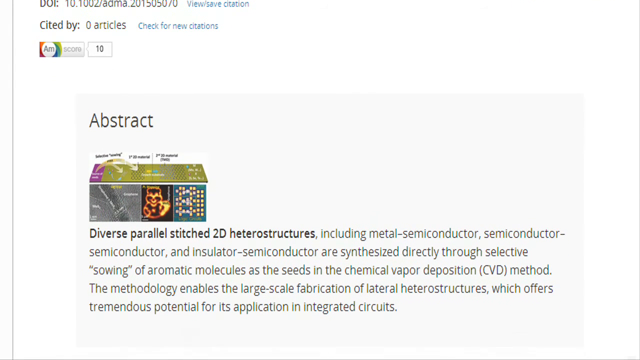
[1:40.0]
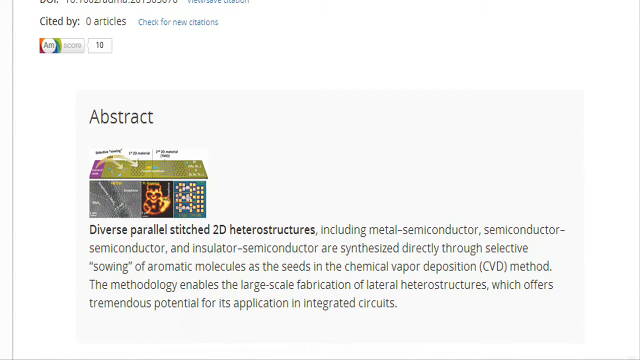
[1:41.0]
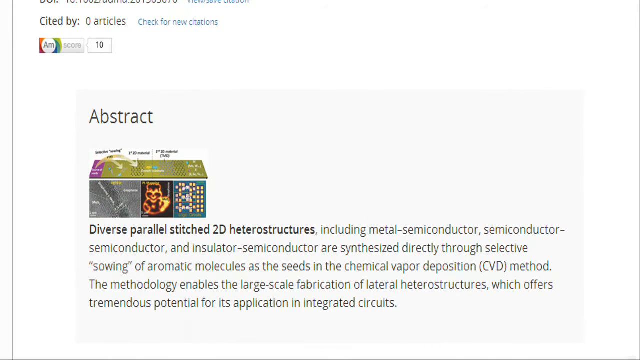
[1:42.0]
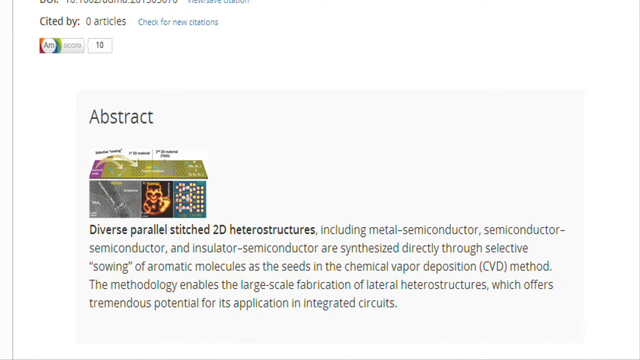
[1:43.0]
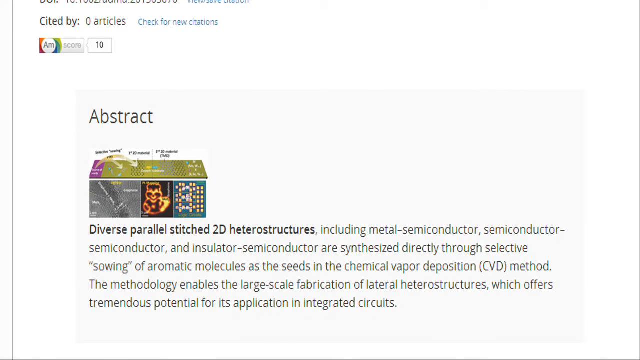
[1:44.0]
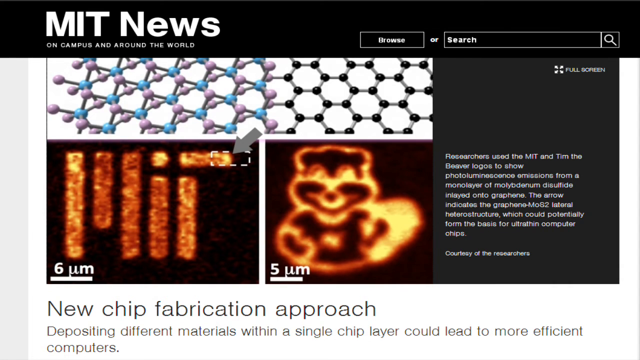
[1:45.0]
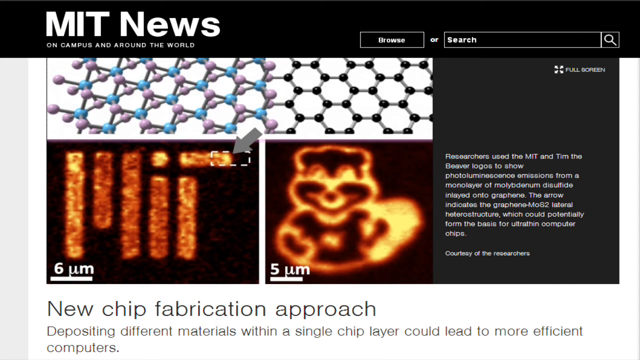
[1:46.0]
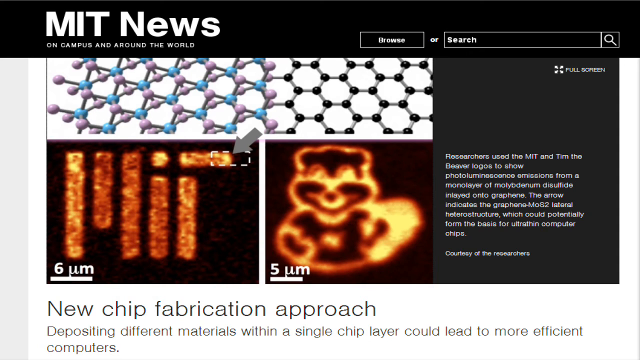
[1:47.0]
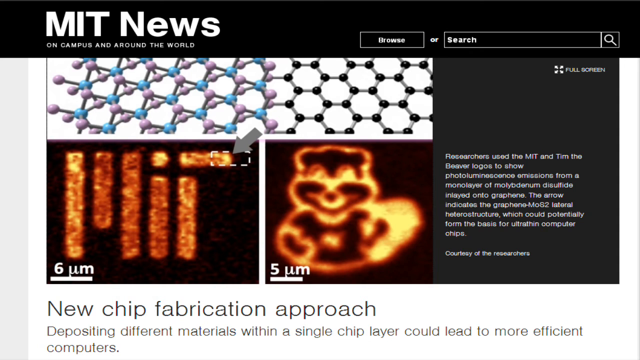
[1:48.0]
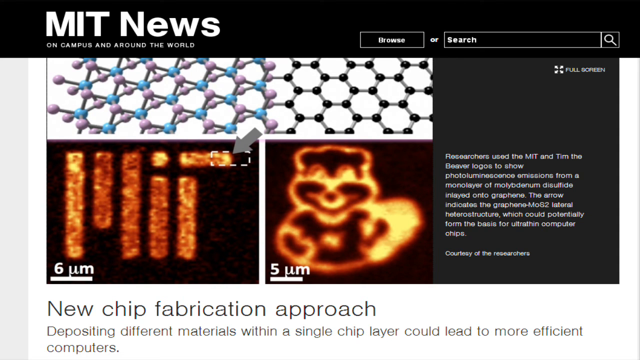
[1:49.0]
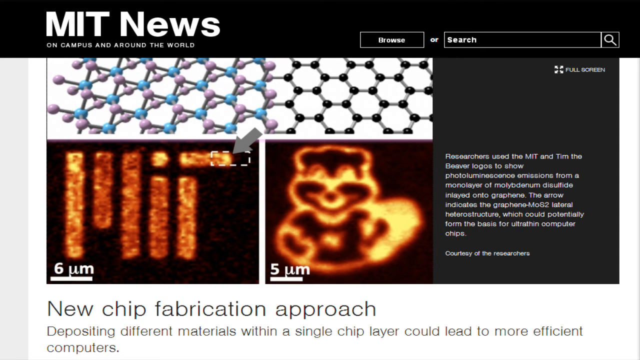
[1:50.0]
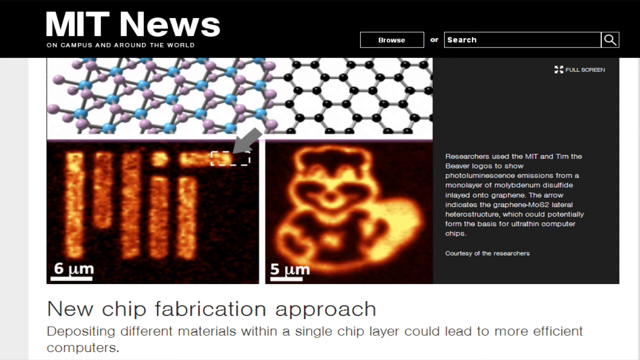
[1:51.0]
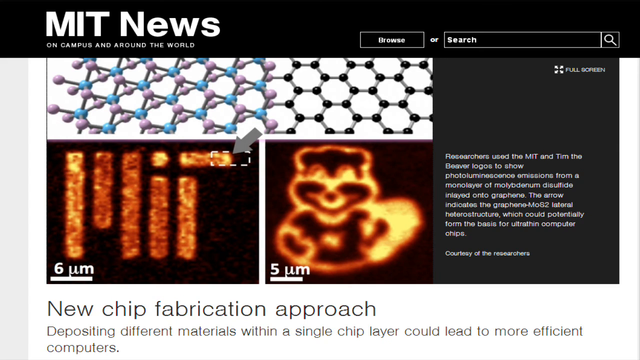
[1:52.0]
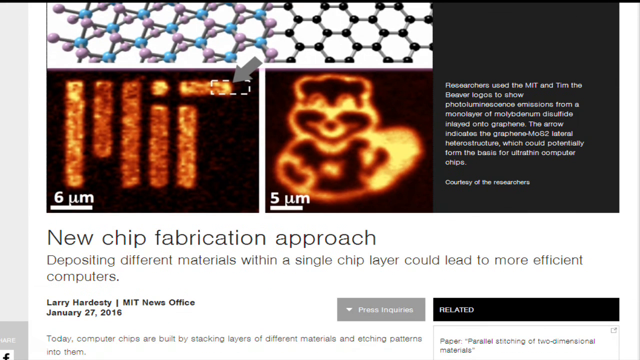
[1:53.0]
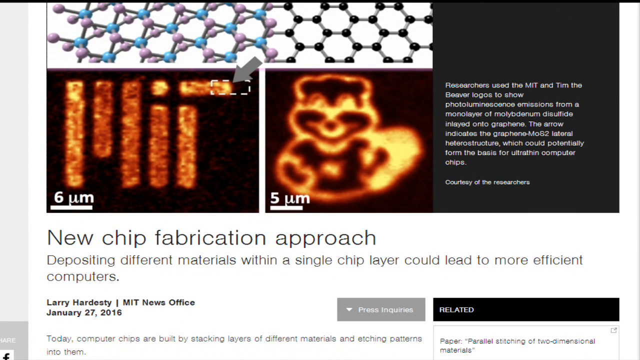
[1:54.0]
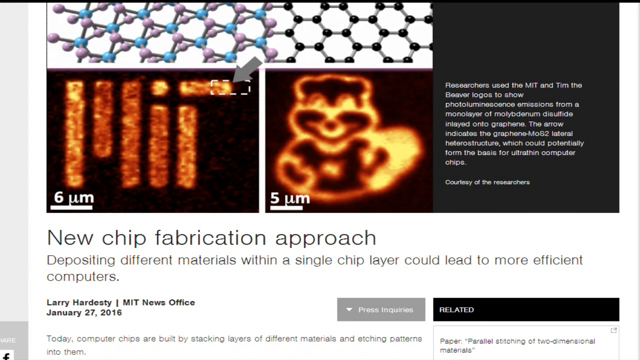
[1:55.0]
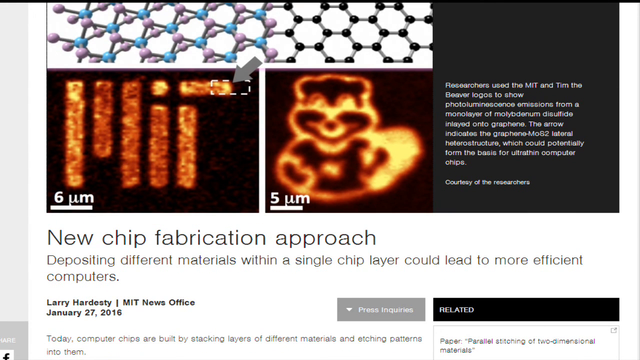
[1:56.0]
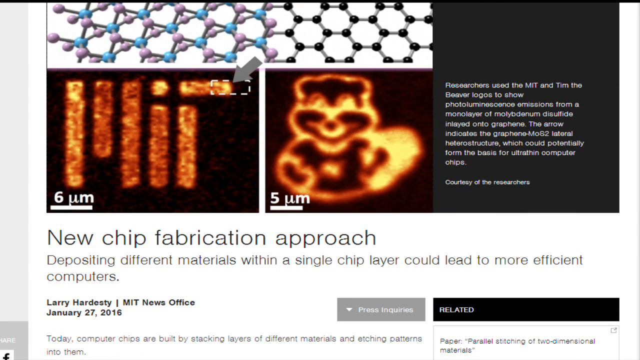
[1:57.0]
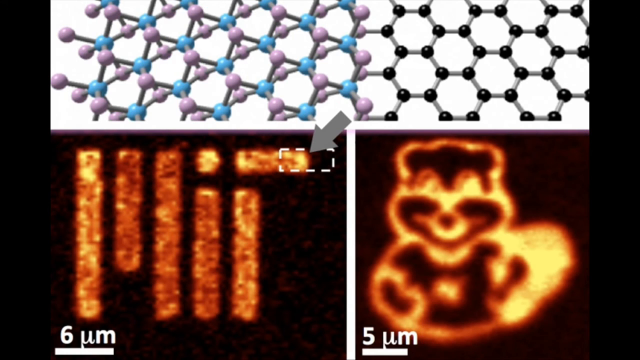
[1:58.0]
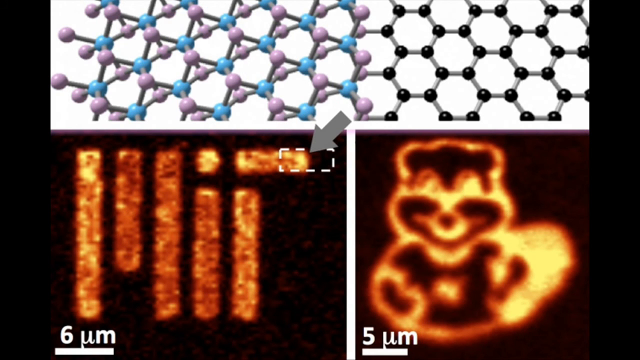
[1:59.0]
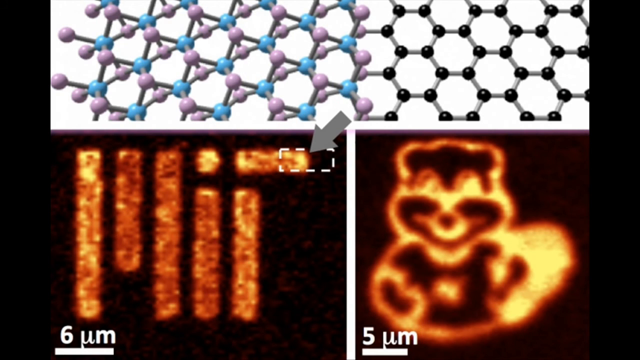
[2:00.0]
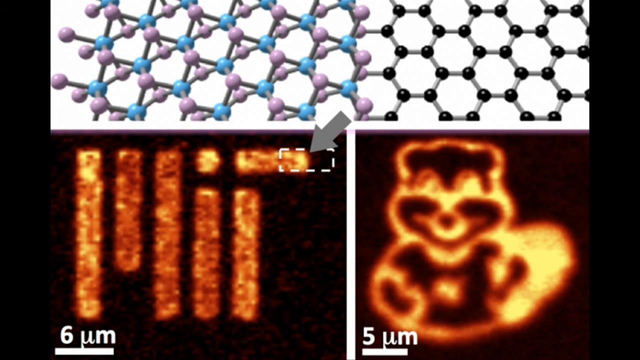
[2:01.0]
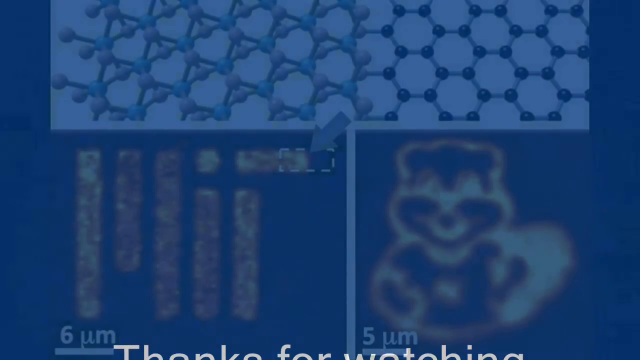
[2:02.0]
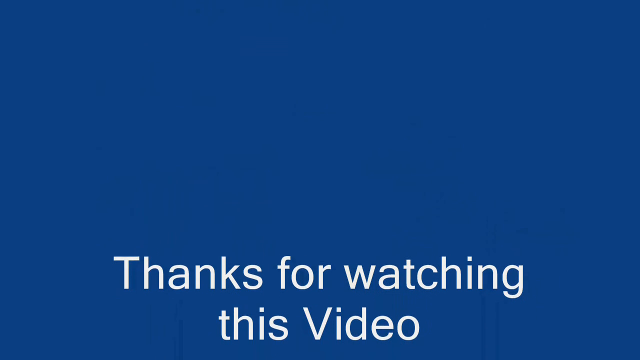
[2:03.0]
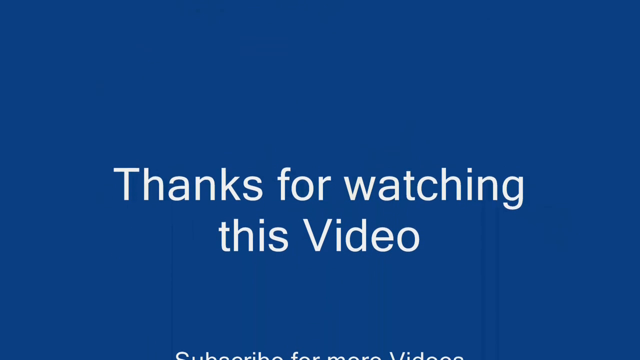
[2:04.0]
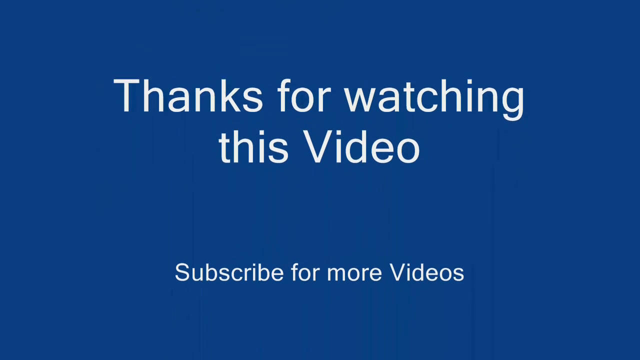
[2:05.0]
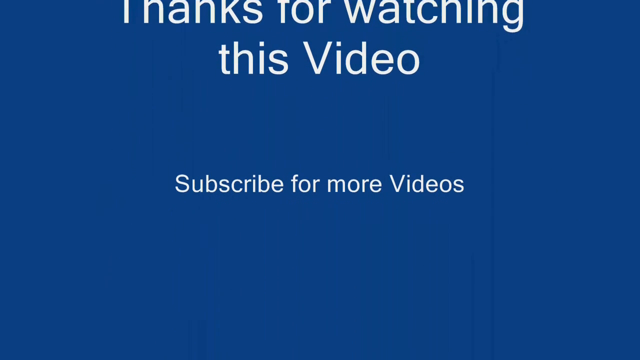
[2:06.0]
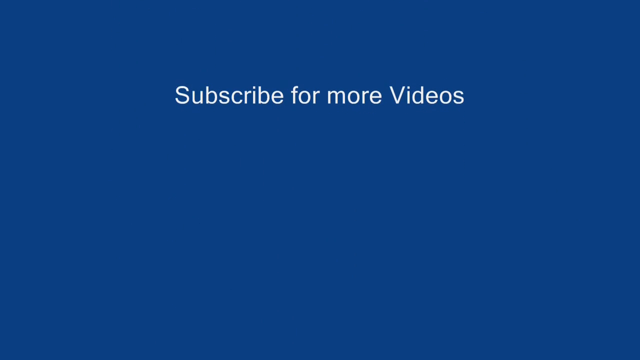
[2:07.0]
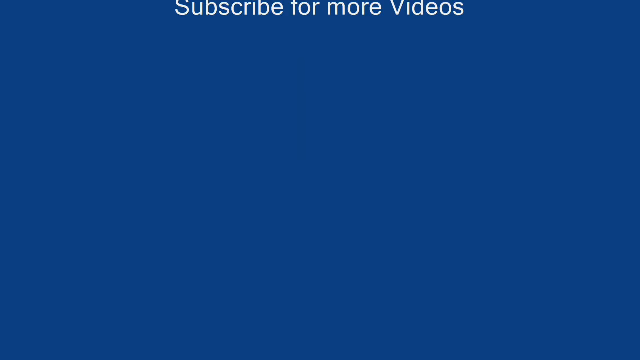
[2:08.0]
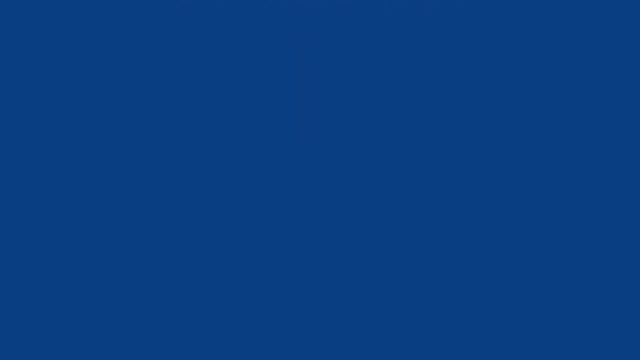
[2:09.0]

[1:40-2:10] The abstract of the article continues to be shown, and the view scrolls into part of it. The video then goes back to the earlier slide with the infrared-like view, the six micrometer and five micrometer scales, and the lattice structure picture, this time with a white background instead of black at the top. The lattice is three-dimensional on the left-hand side, going to two-dimensional on the right-hand side, and a dotted line surrounds a certain section. The video then cuts to a final credit slide thanking viewers for watching and asking them to subscribe for more videos like this, with an arrow pointing down to a subscribe button.